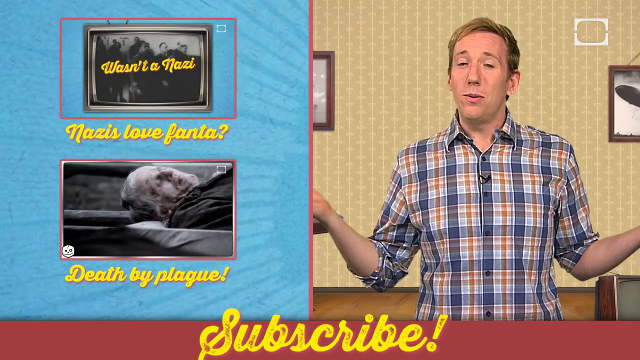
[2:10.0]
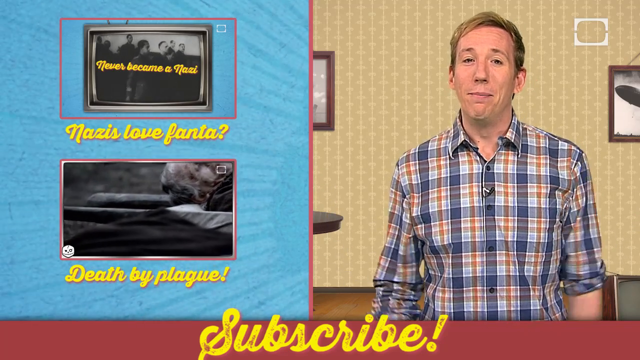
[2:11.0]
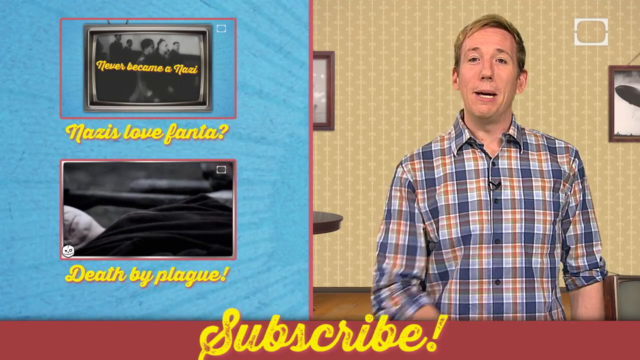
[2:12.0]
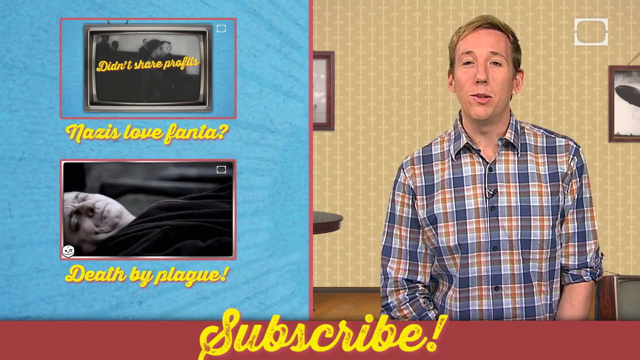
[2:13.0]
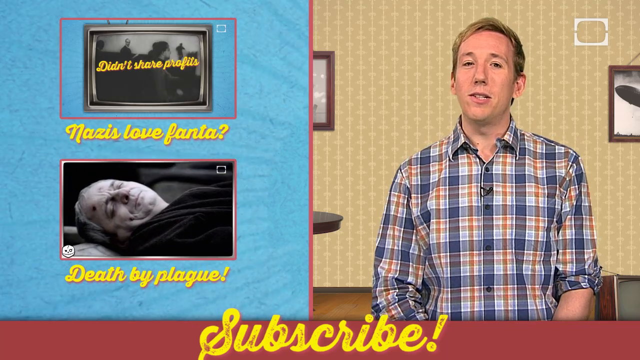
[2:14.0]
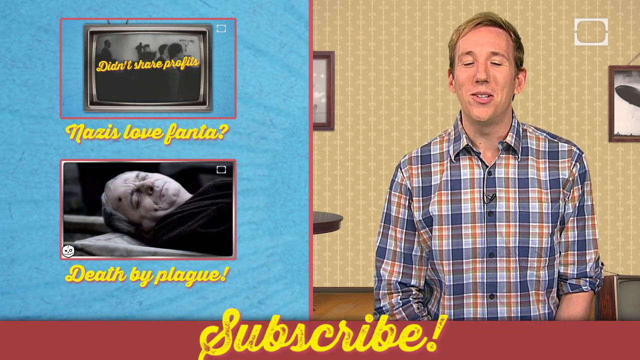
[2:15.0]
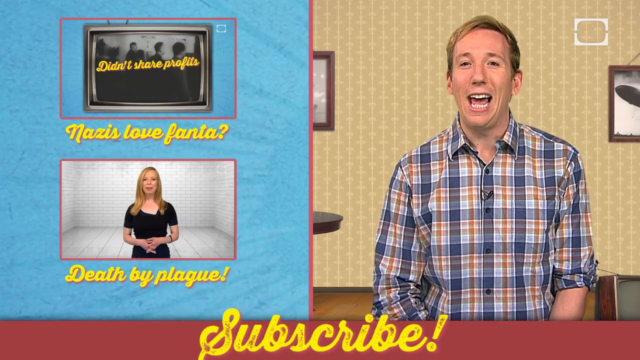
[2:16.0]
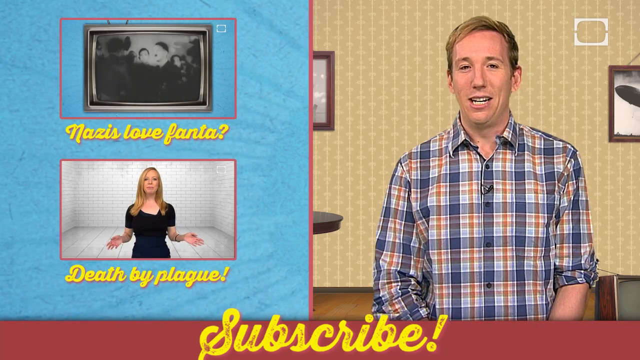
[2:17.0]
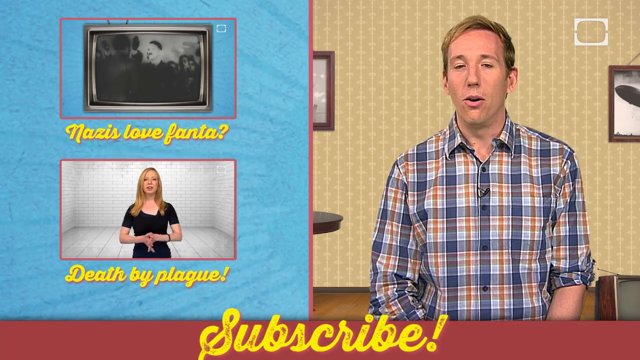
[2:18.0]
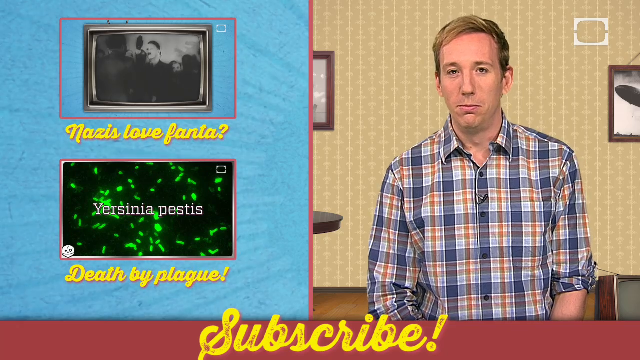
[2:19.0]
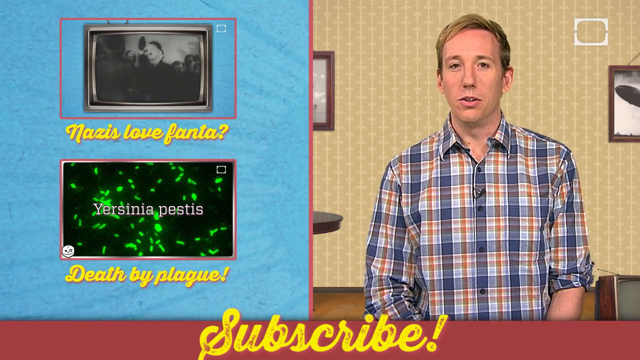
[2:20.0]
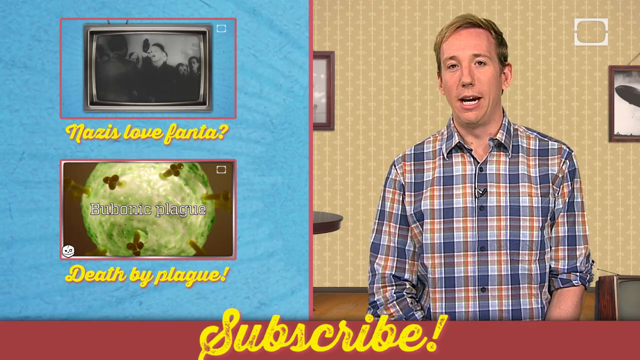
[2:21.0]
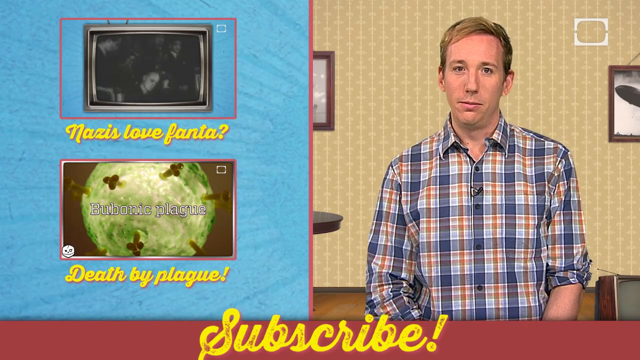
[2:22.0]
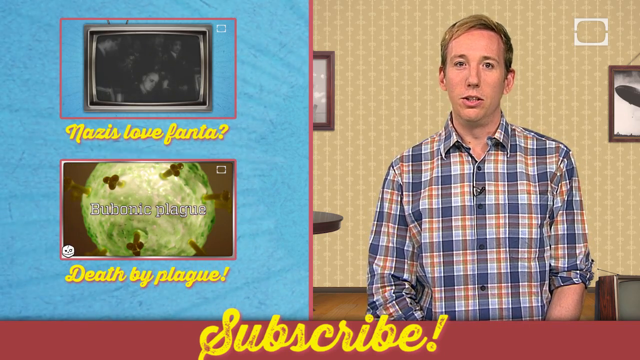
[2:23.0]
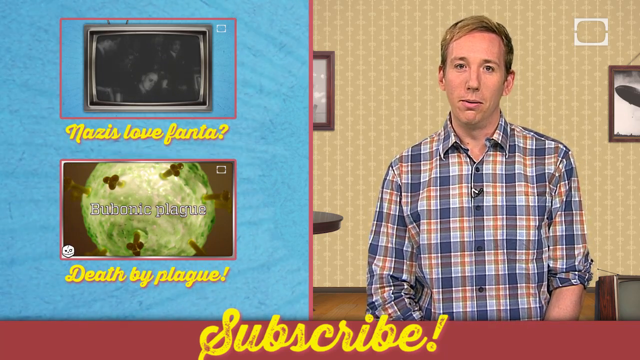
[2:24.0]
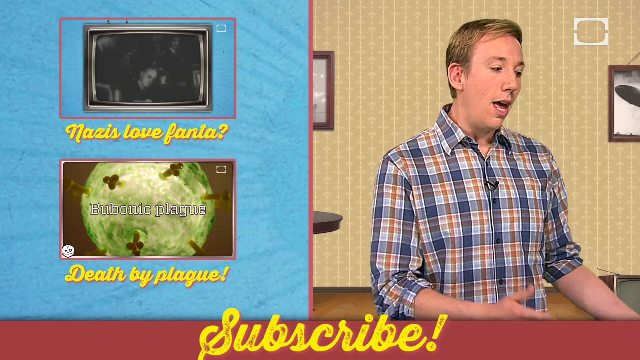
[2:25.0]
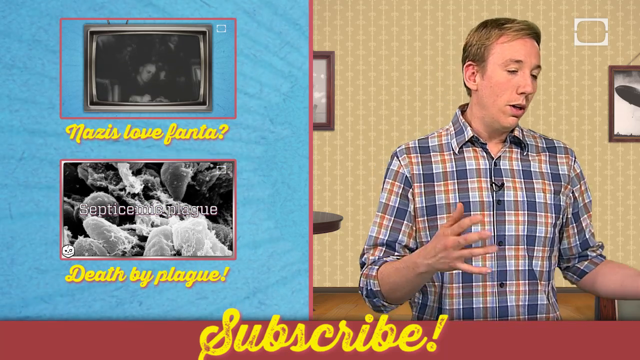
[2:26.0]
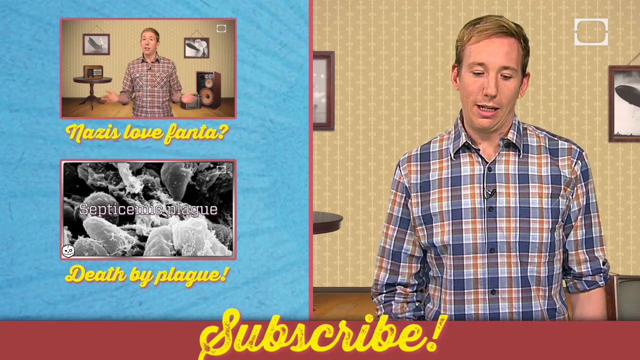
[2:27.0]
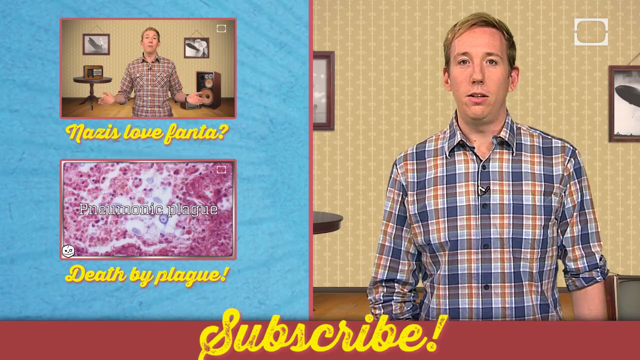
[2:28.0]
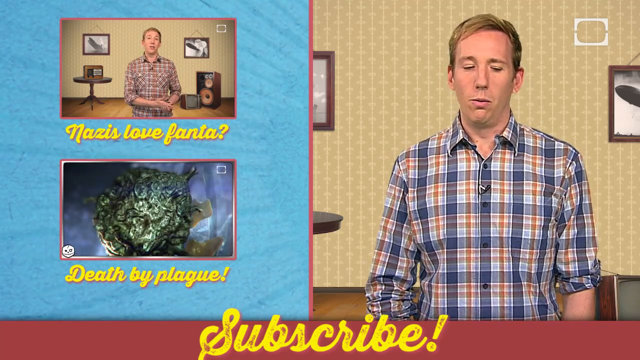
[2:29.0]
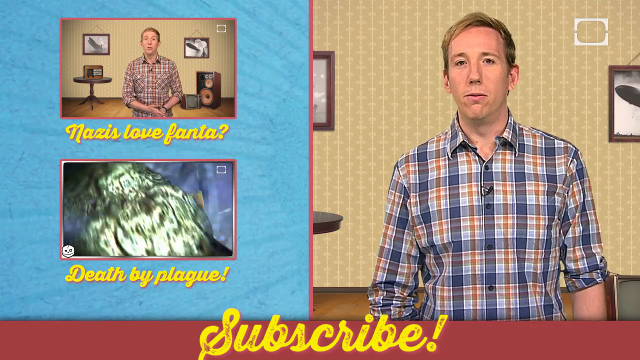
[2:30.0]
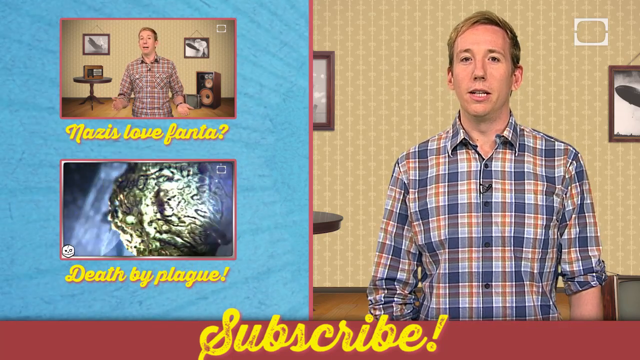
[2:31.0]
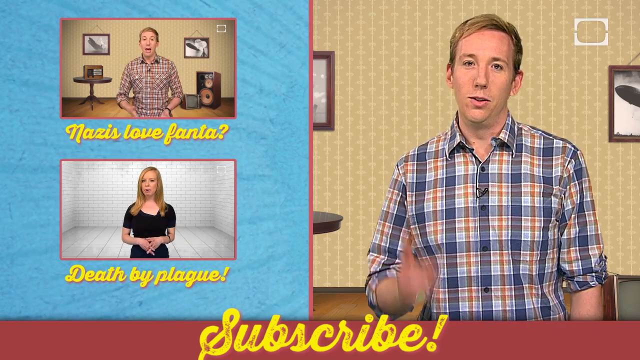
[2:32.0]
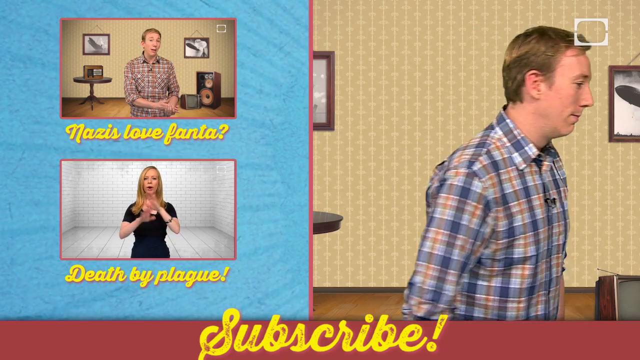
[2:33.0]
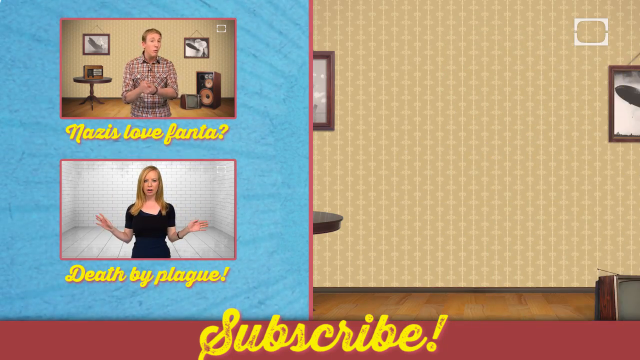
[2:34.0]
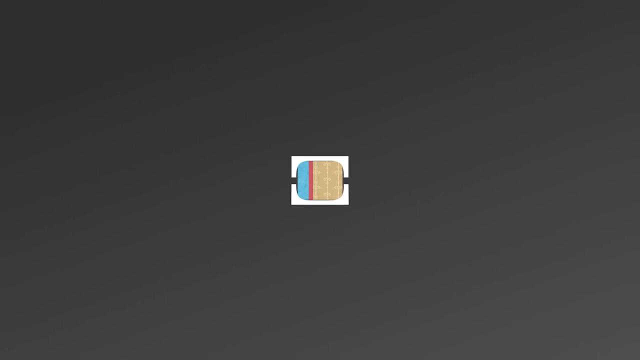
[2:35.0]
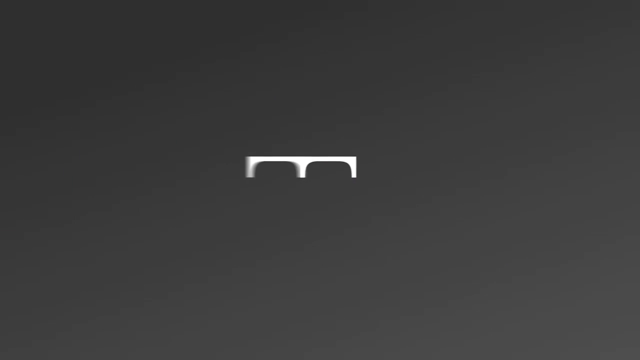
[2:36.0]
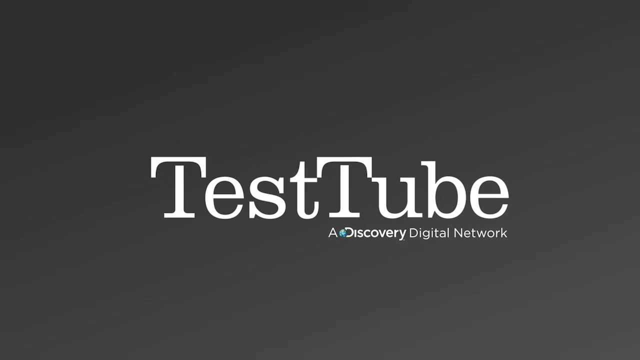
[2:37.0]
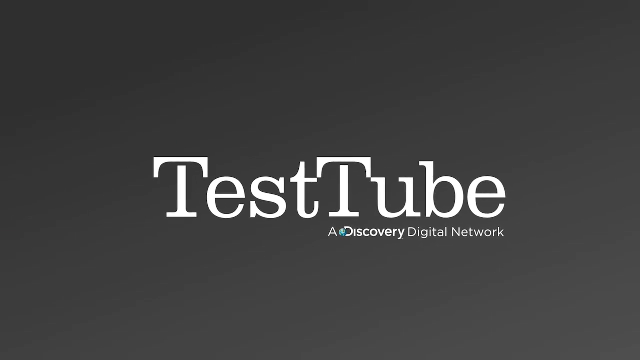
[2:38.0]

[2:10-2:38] On the end screen, Scott is on the right, talking throughout. On the left side are the videos he recommends. At the top left, text reads "Nazis Love Phantom," apparently the video's title, and that video plays at the top left. Right below it is another video showing a woman, labeled "Death by Plague," apparently its title. At the end, Scott walks to the right off screen.